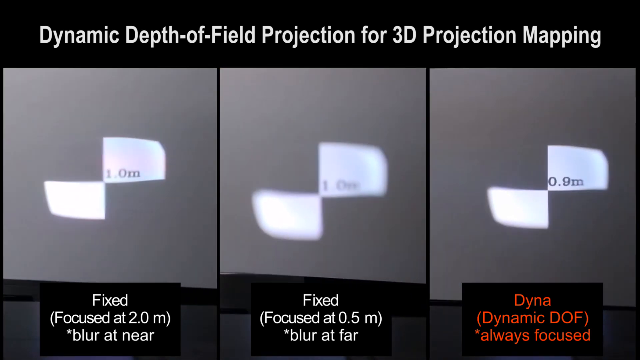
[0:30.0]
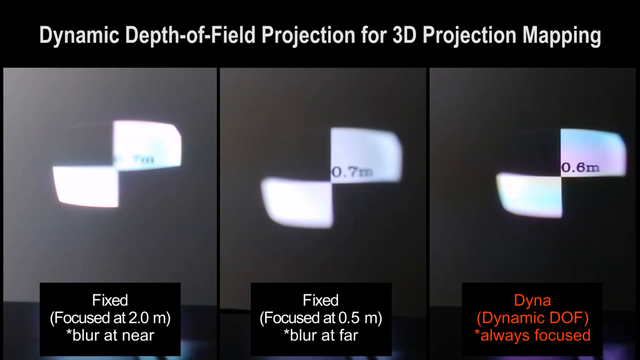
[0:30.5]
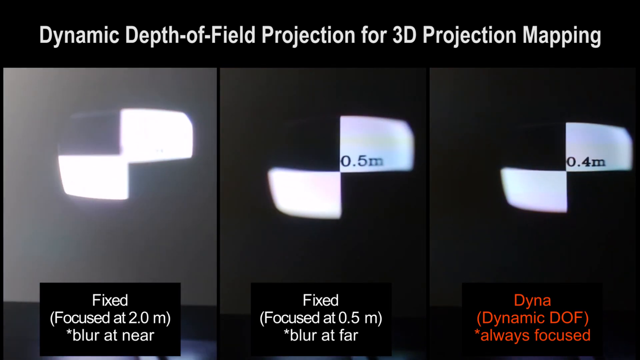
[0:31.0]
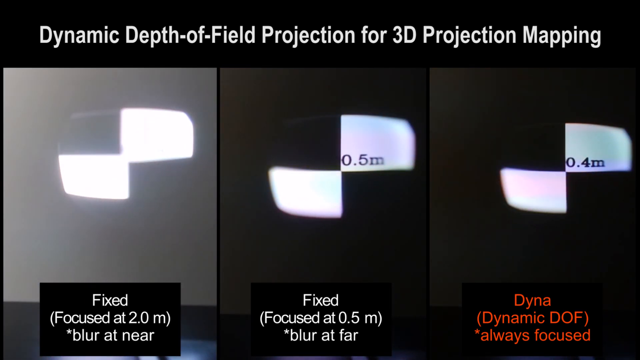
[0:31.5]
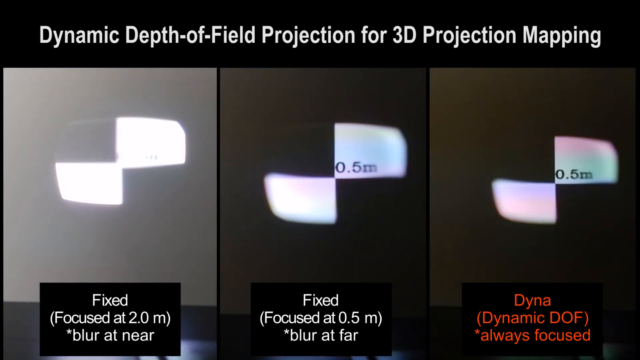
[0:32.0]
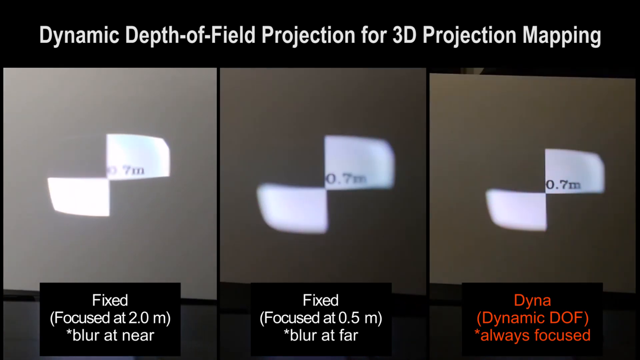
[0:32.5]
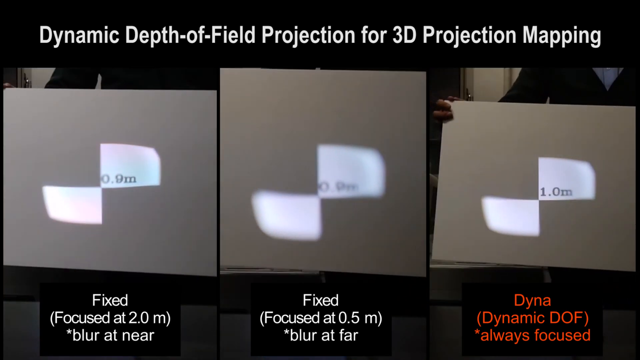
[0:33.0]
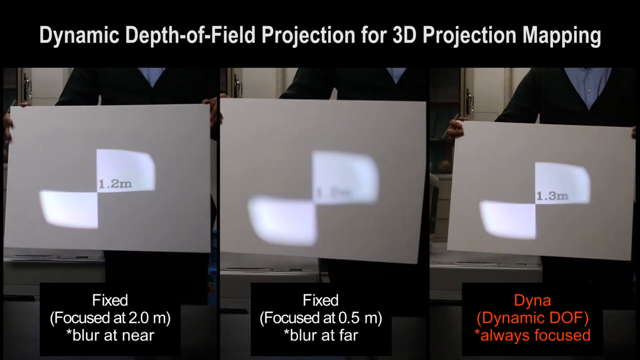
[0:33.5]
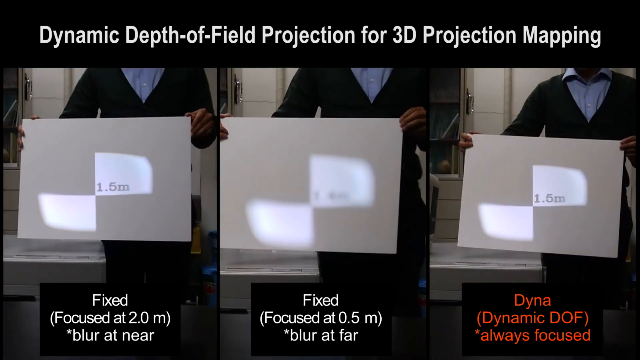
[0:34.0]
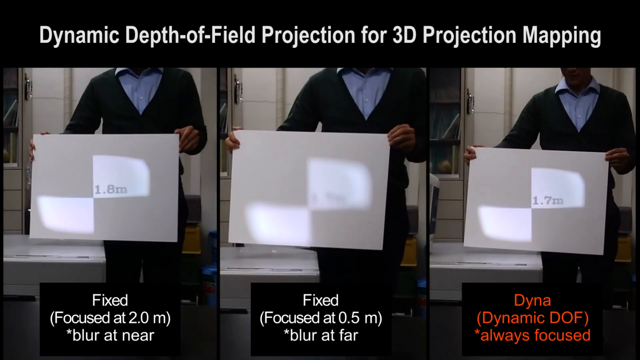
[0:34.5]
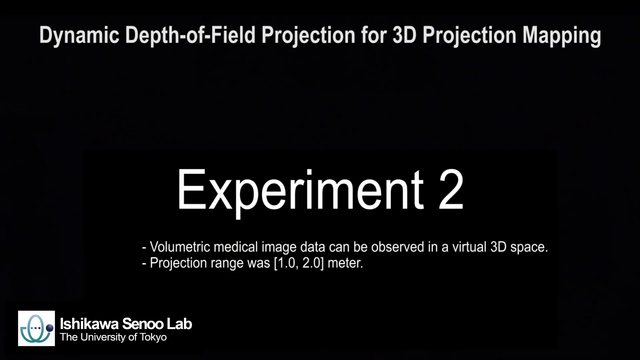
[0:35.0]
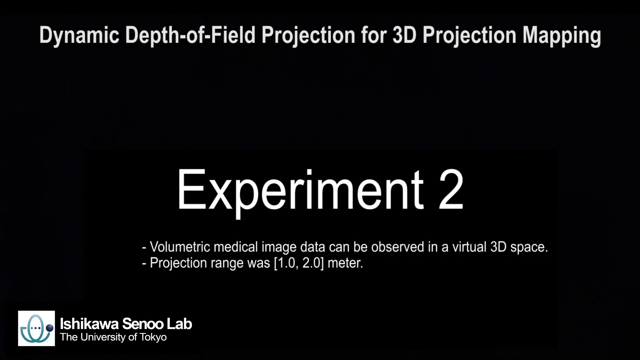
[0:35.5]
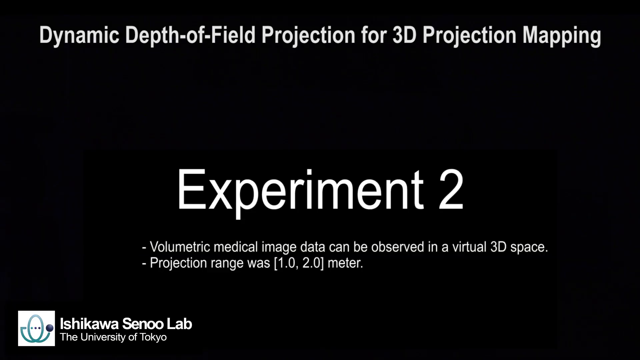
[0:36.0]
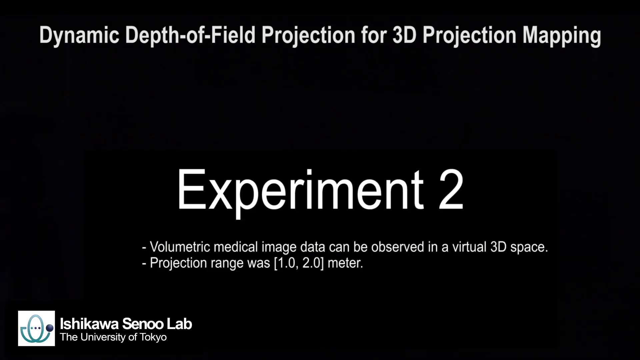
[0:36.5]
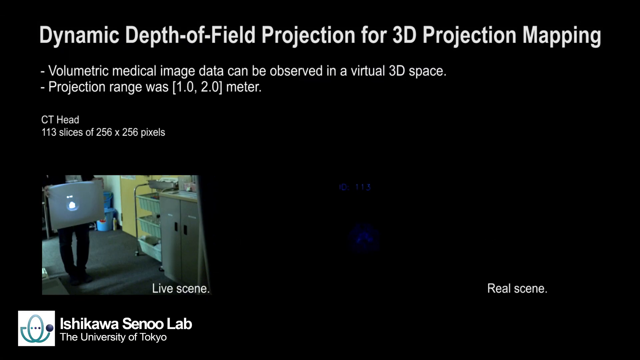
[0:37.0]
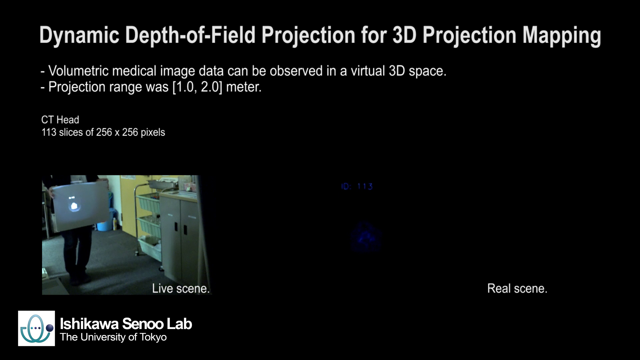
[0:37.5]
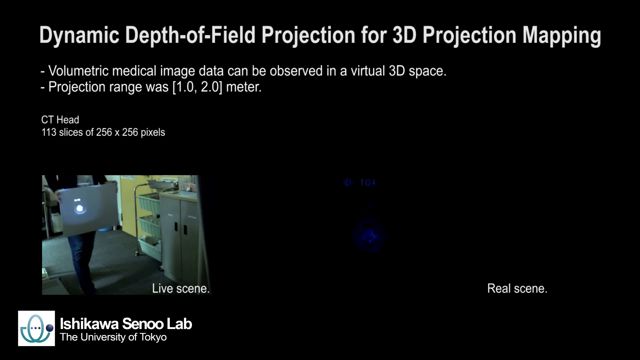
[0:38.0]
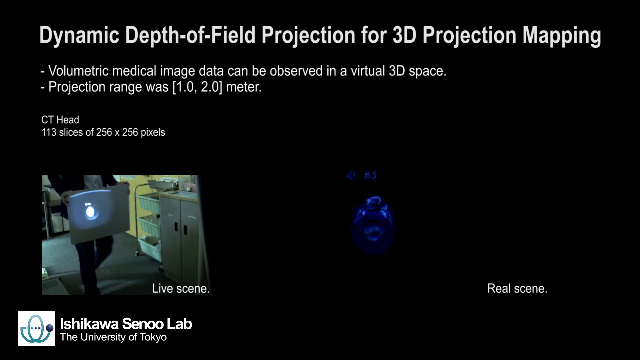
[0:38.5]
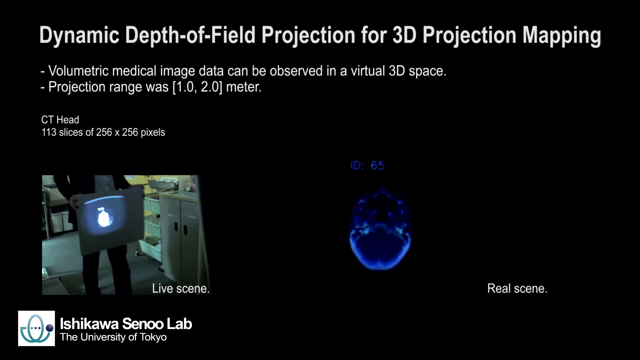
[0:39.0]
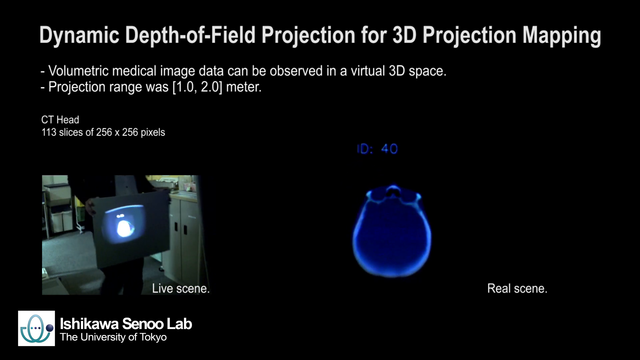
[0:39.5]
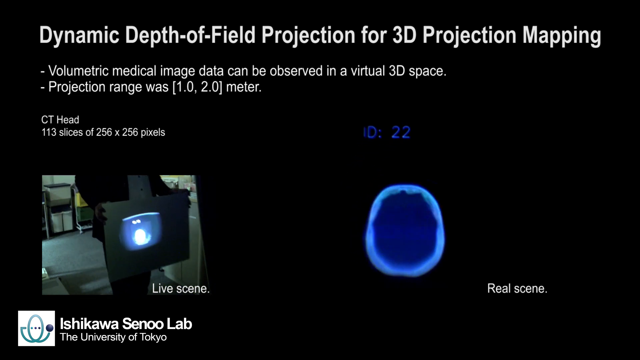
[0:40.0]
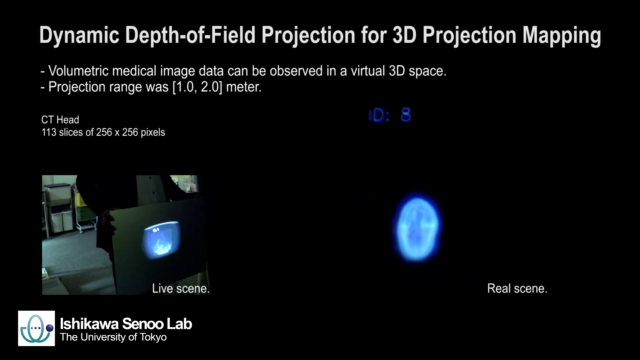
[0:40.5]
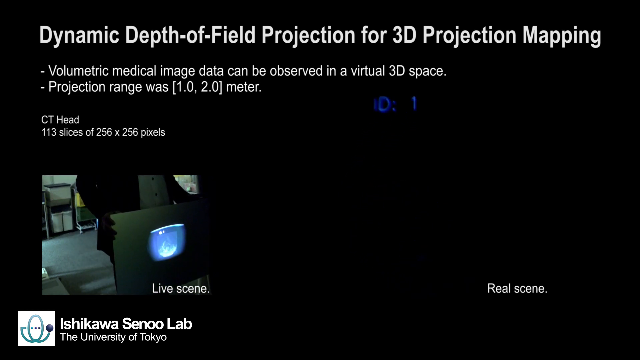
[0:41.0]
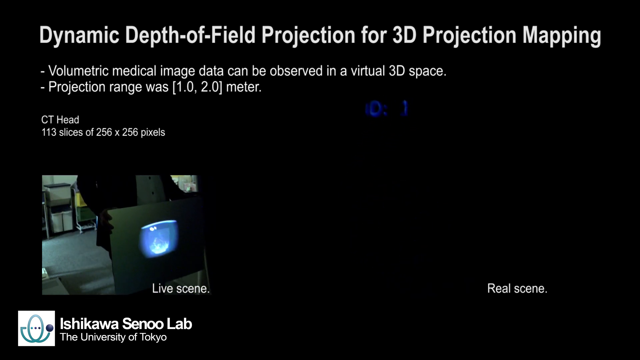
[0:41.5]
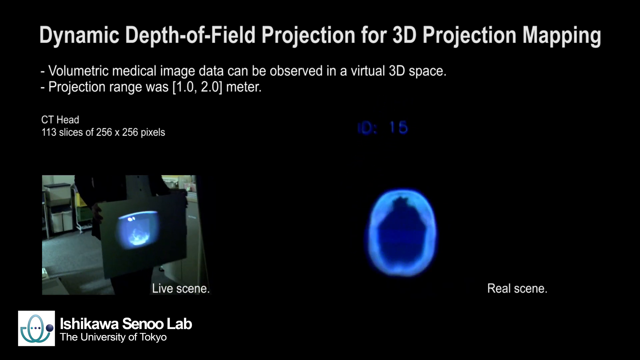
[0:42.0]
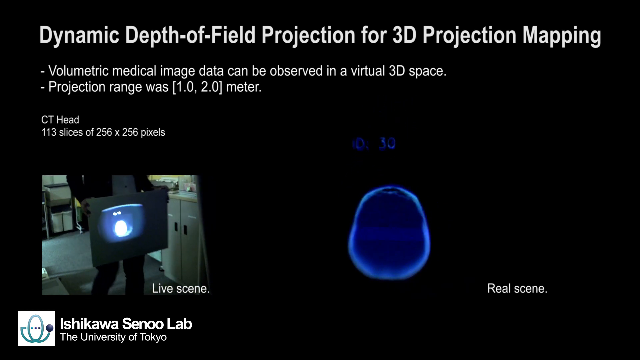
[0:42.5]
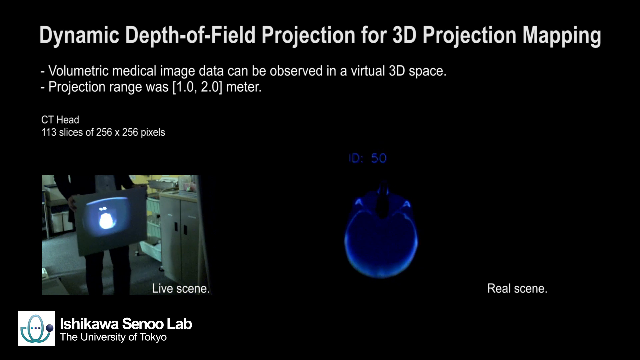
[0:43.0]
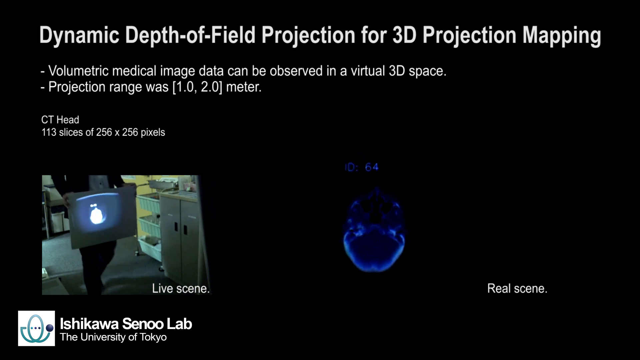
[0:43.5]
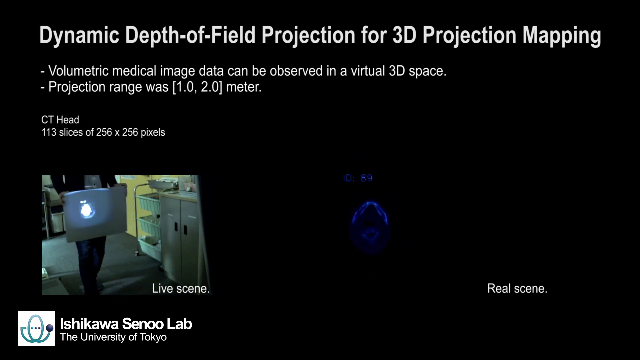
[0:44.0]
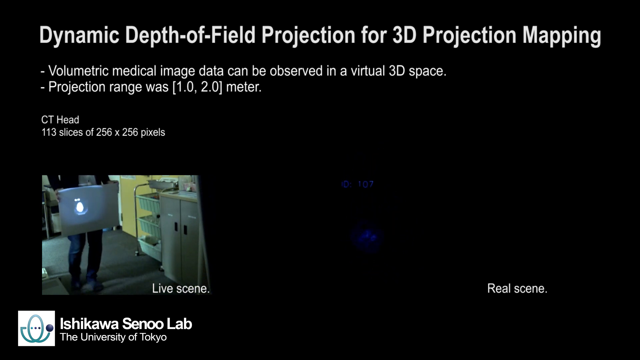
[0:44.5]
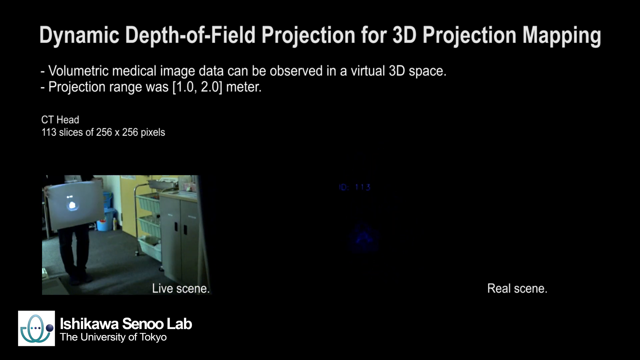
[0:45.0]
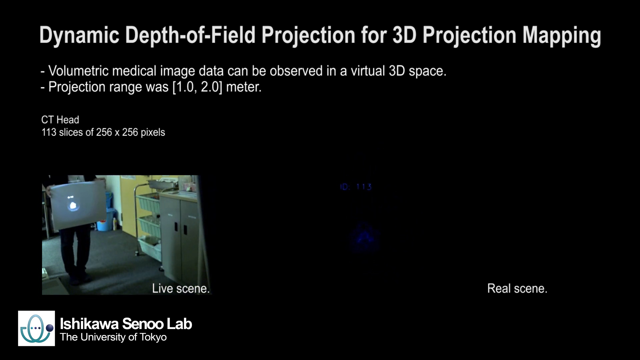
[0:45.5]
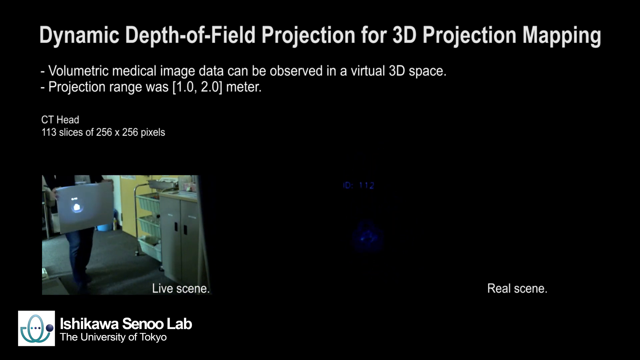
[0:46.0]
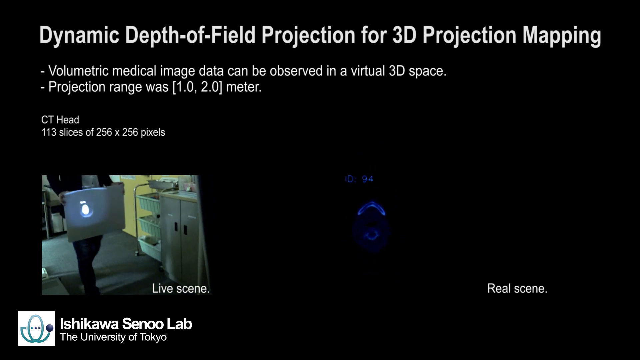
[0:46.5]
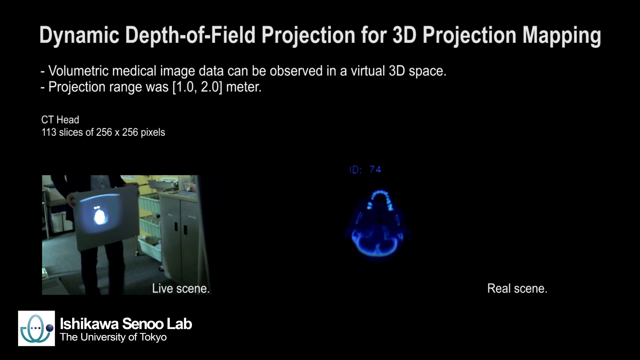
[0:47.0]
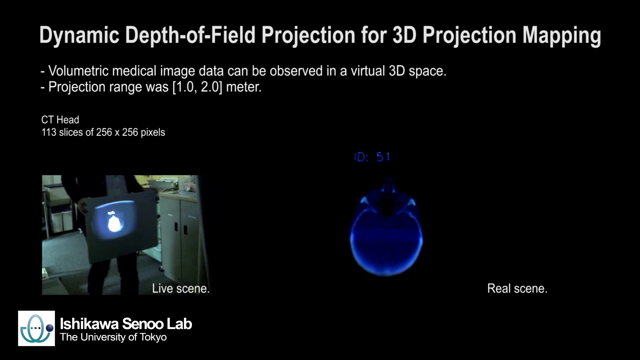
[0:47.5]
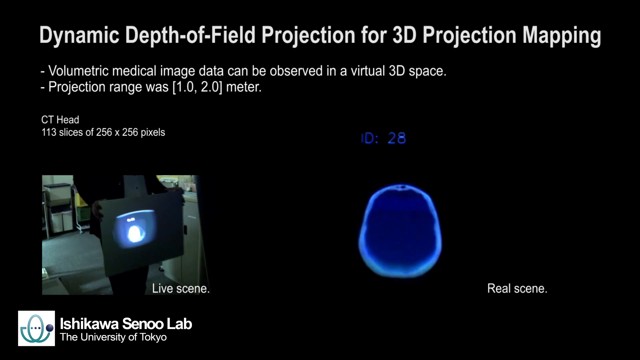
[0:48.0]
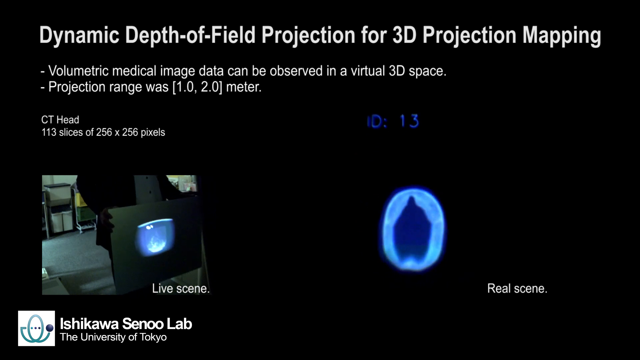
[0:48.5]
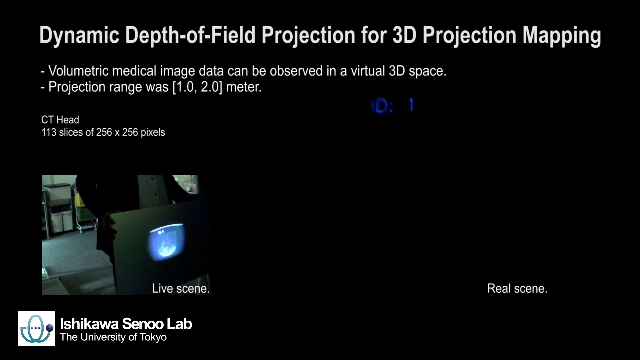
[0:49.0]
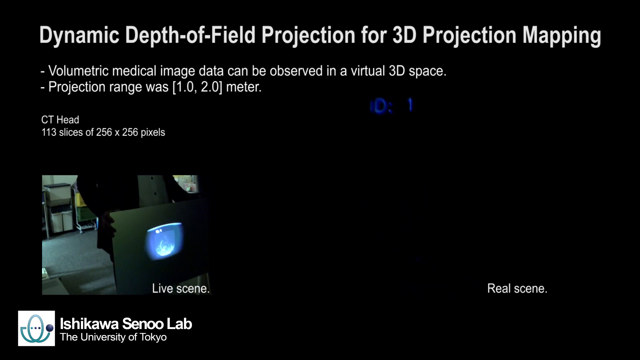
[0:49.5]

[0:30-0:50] The man brings a piece of paper close to the camera, and each screen shows two squares. Text says "dynamic depth of field prediction for 3D projection mapping." The man pulls back, and then another screen says "Volumetric medical image data can be observed in virtual 3D space," with the numbers 1.0 and 2.0 meters. Next comes a screen with two images at the bottom; at the top is the previous information with the wording about the volumetric medical image and dynamic depth of field. Underneath, a man is walking holding paper with what looks like a glow-in-the-dark image that goes light blue and dark blue.